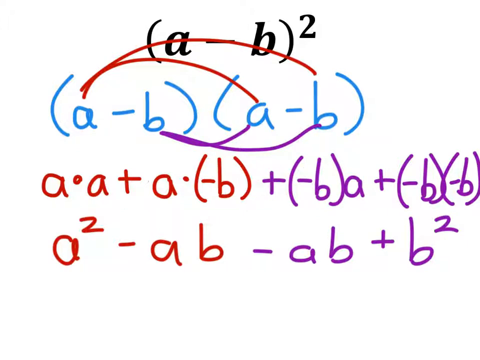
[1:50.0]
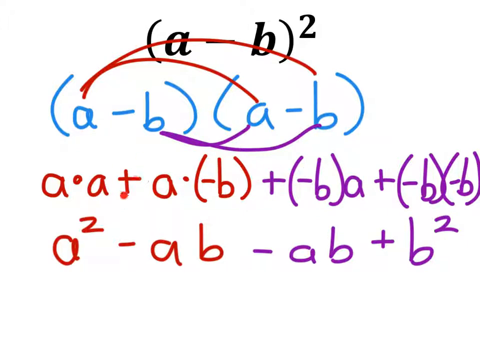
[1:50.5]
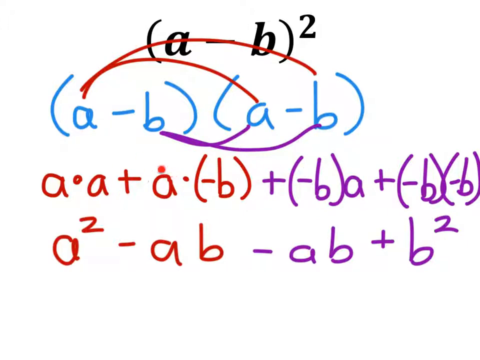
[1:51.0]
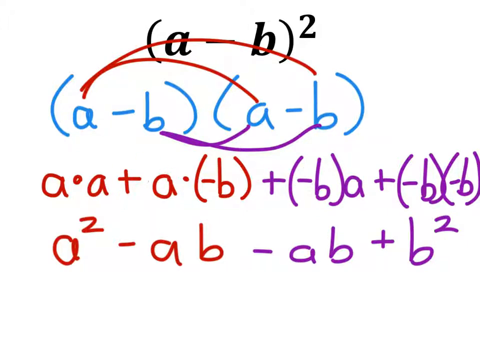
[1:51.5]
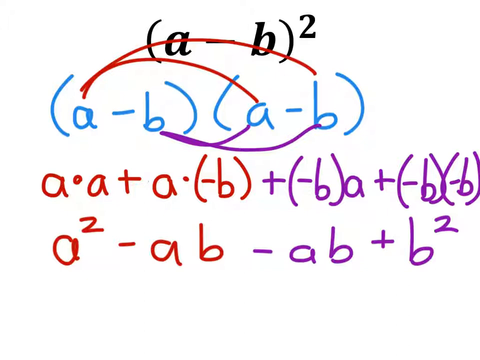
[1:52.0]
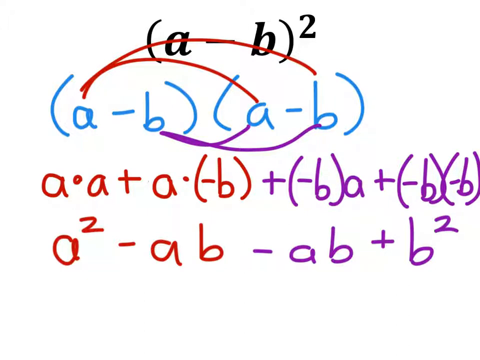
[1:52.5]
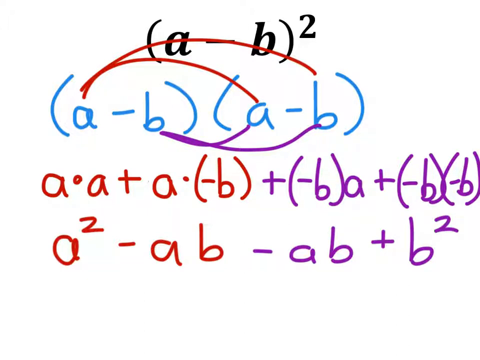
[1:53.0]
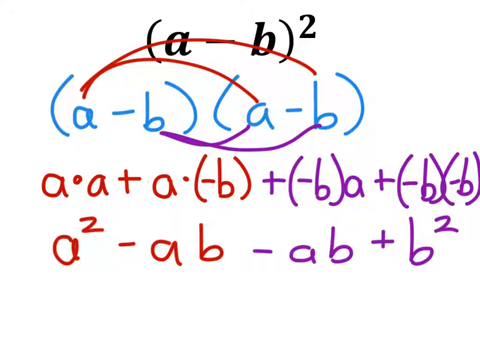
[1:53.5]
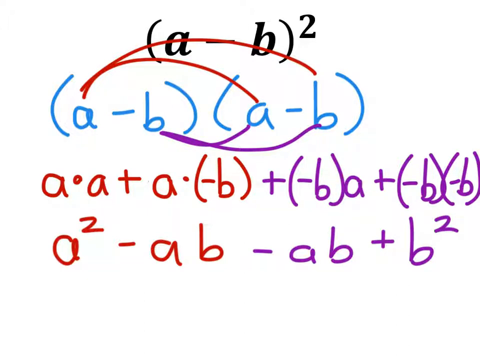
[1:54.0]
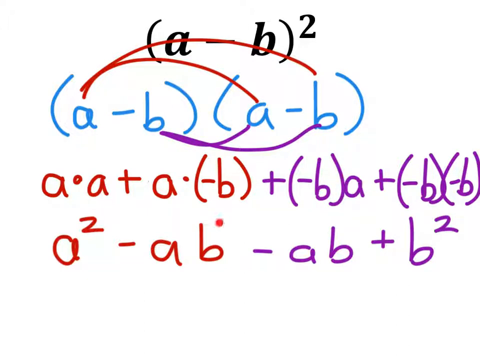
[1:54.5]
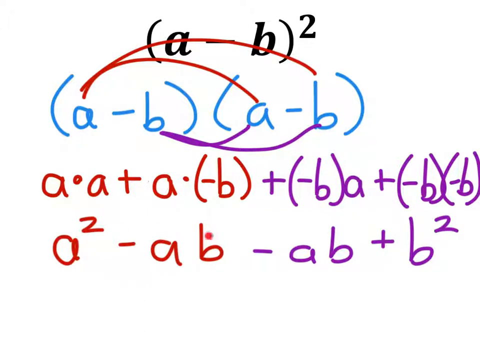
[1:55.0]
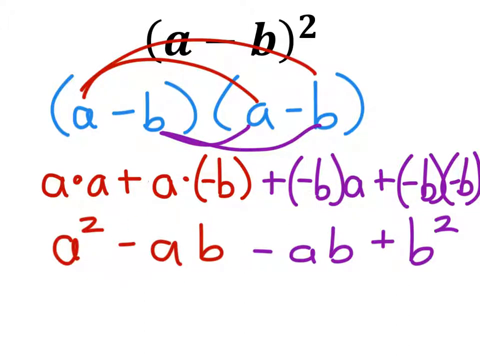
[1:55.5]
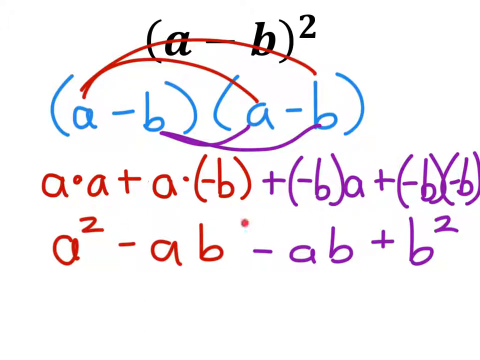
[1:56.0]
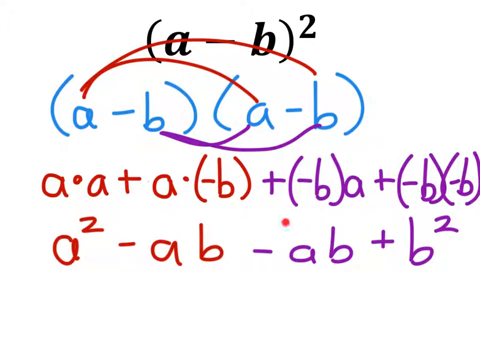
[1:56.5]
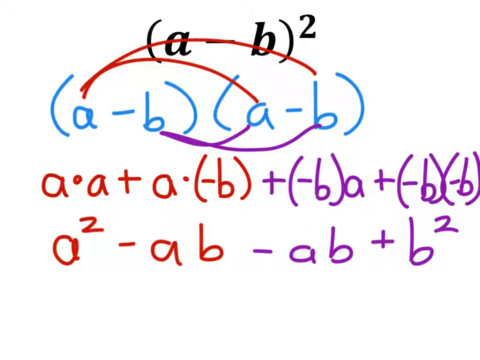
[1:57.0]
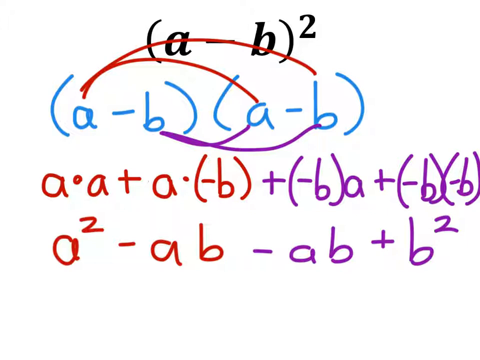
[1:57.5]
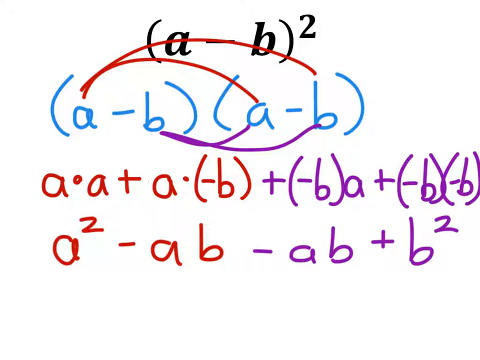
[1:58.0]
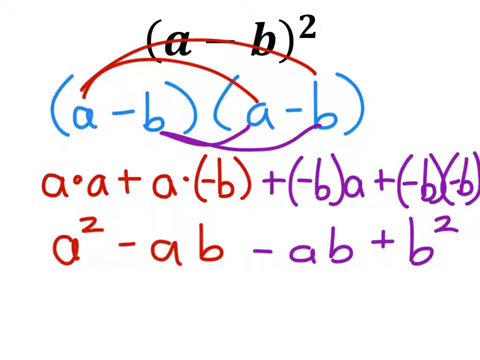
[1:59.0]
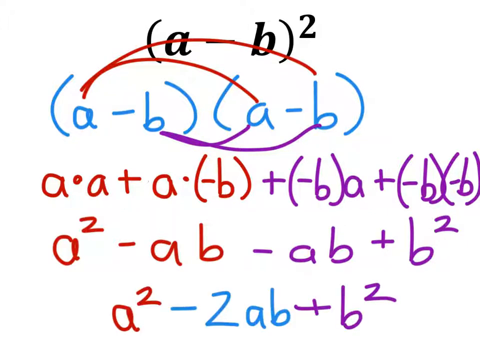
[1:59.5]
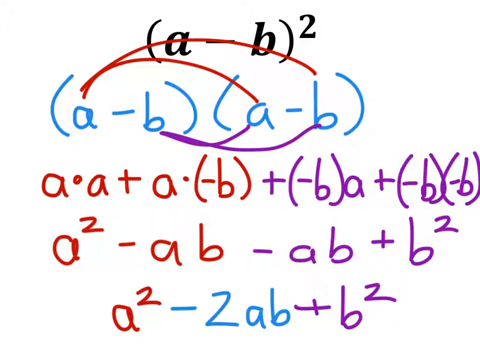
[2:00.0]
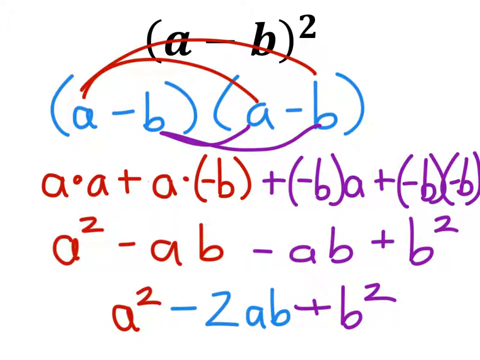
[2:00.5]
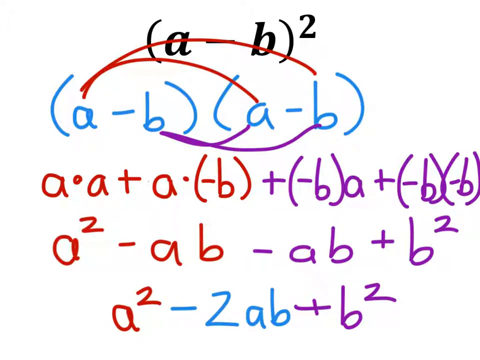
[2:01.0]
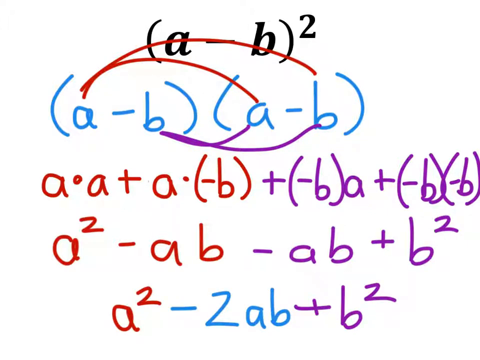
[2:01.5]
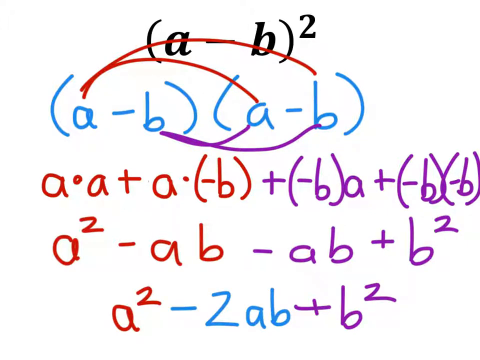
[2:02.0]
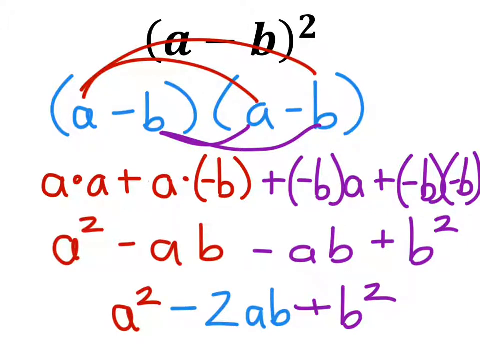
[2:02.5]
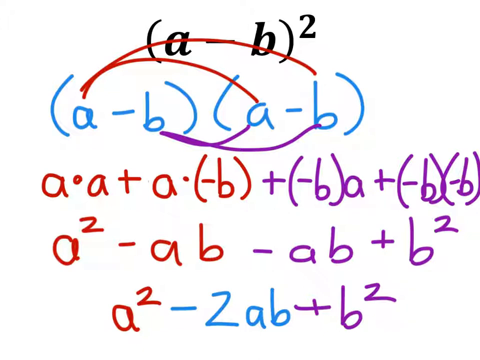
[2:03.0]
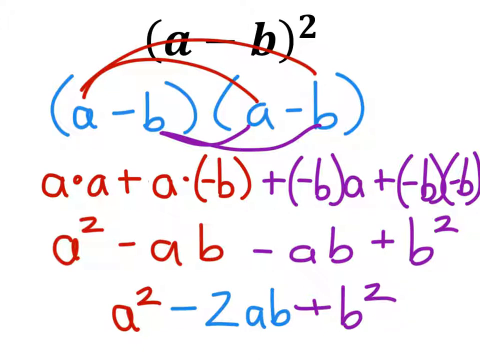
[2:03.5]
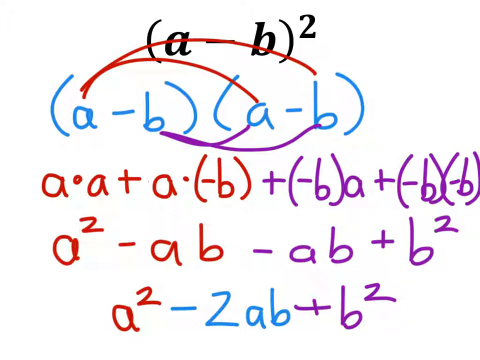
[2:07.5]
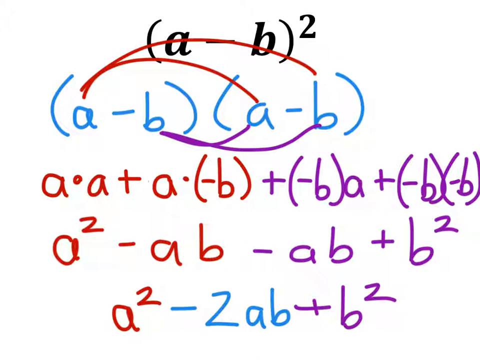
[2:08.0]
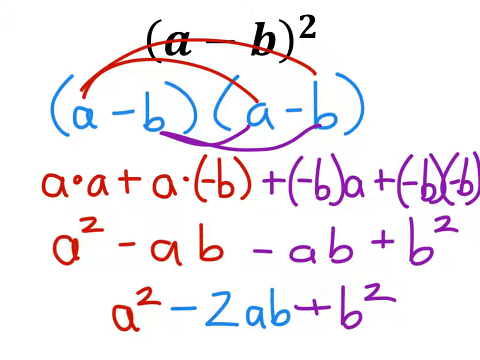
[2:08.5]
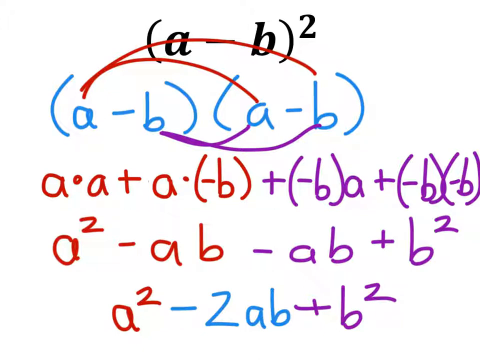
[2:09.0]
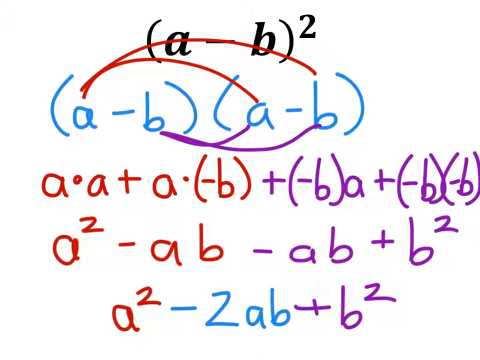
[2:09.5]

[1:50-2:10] On a white background, (A − B)² is written in black. Below it, in blue, is (A − B)(A − B), with two red lines, one sending A into A and one sending A into B, and under it two purple lines, one sending B into A and one sending B into B. Under this, in red, is A × A + A × (−B), followed in purple by + (−B) × A + (−B) × (−B). Below that, in red, is A² − A × B − A × B + B². The instructor points out various things by circling them.